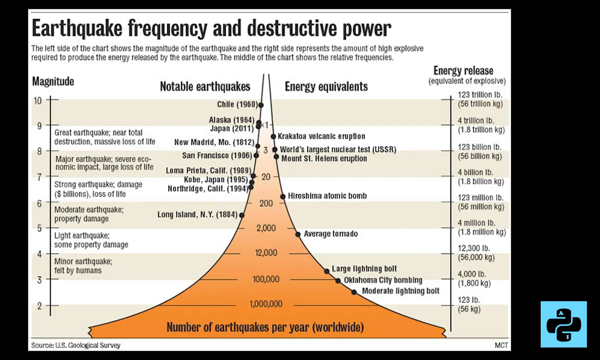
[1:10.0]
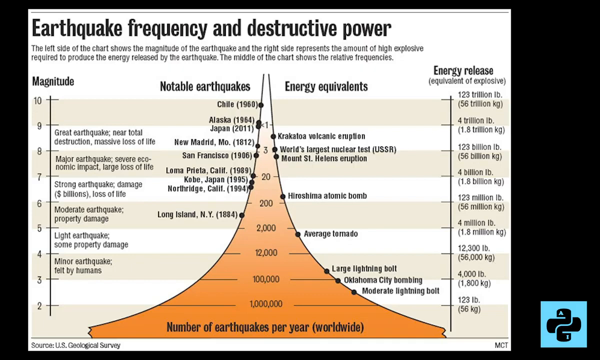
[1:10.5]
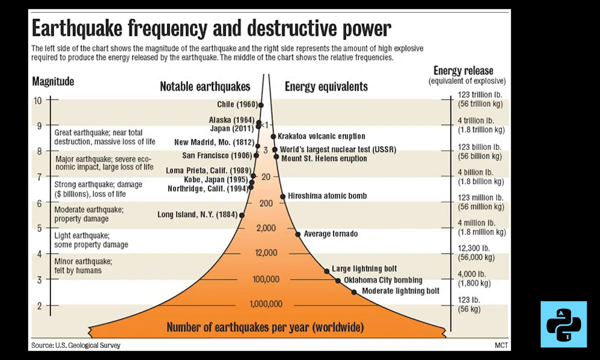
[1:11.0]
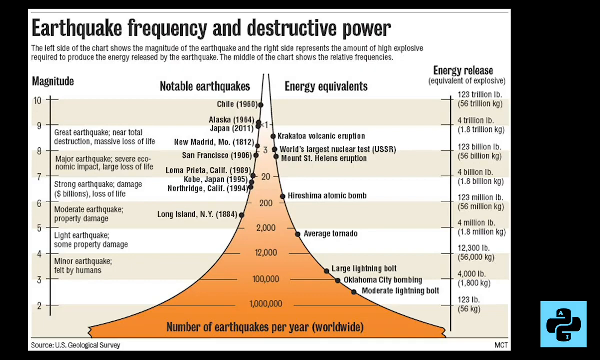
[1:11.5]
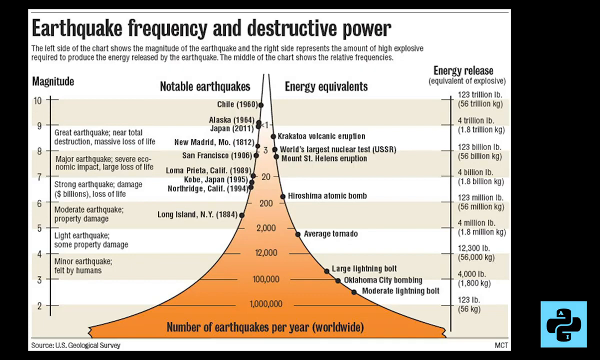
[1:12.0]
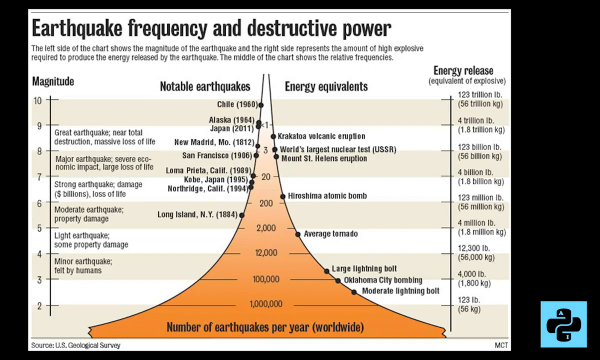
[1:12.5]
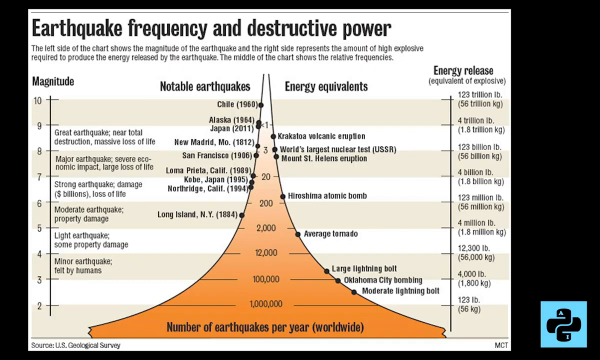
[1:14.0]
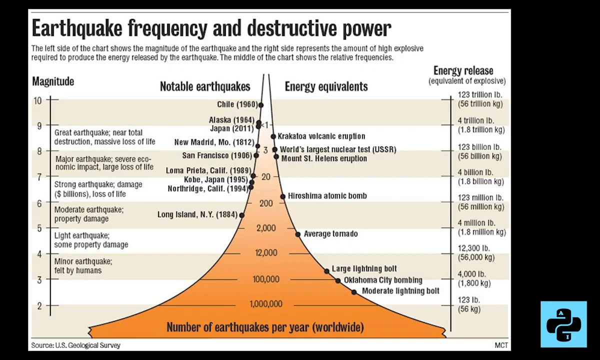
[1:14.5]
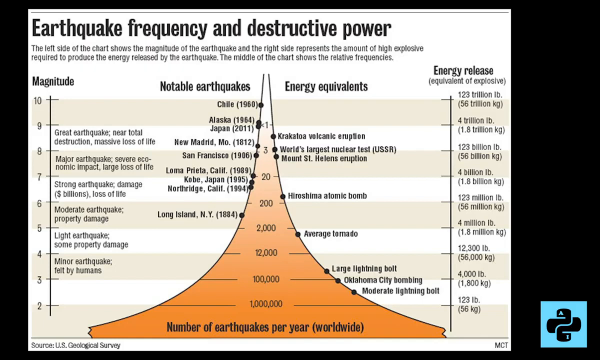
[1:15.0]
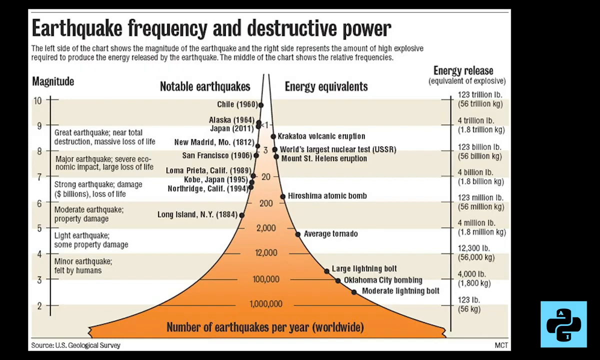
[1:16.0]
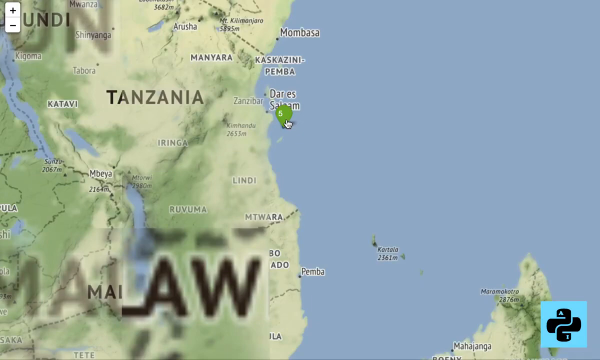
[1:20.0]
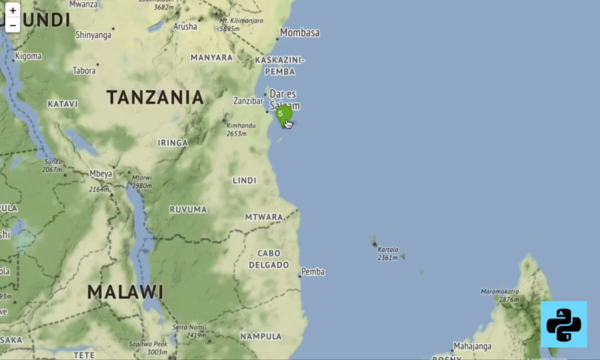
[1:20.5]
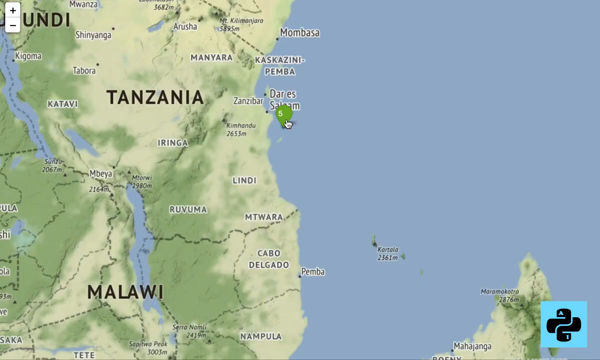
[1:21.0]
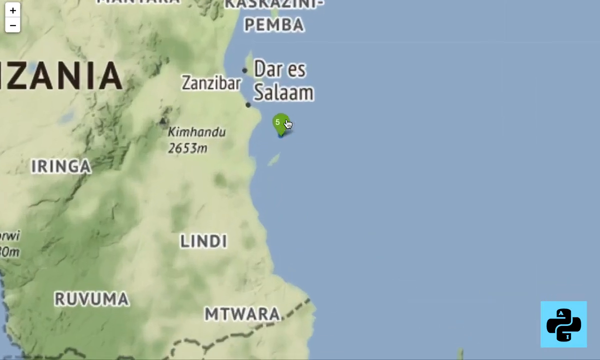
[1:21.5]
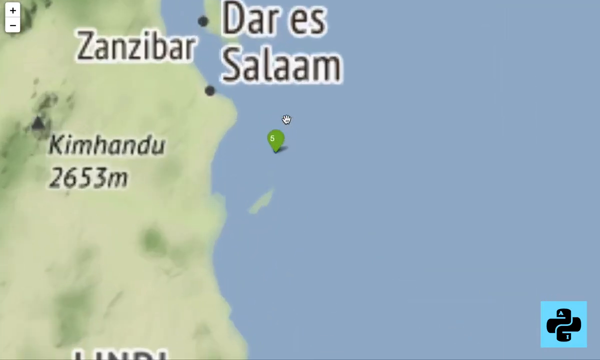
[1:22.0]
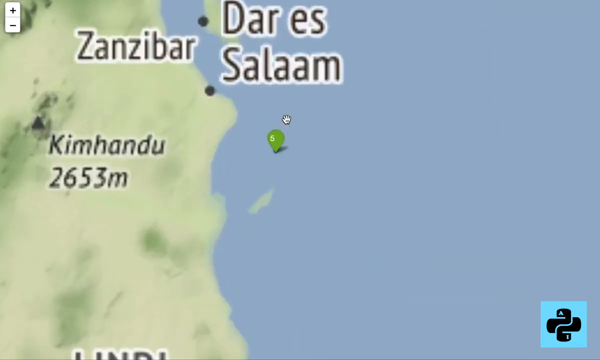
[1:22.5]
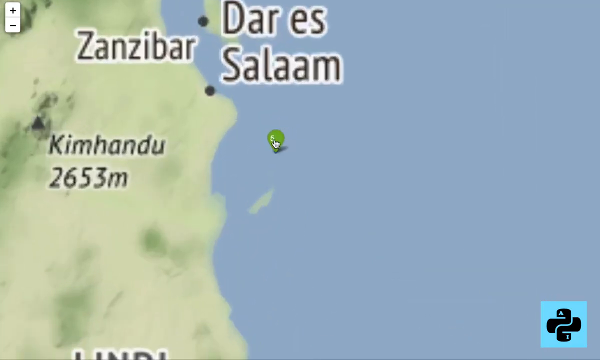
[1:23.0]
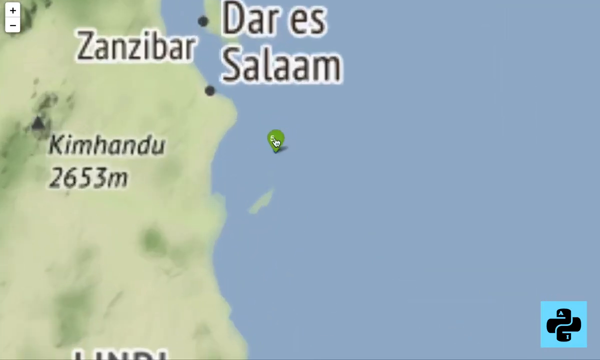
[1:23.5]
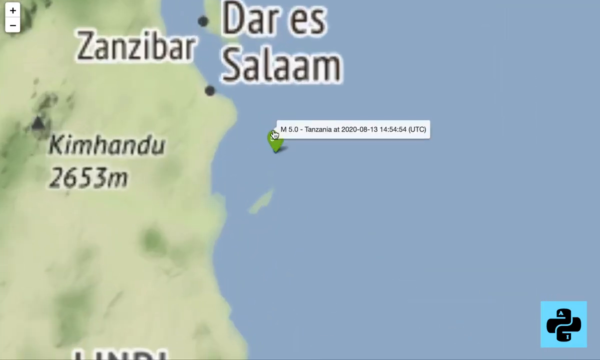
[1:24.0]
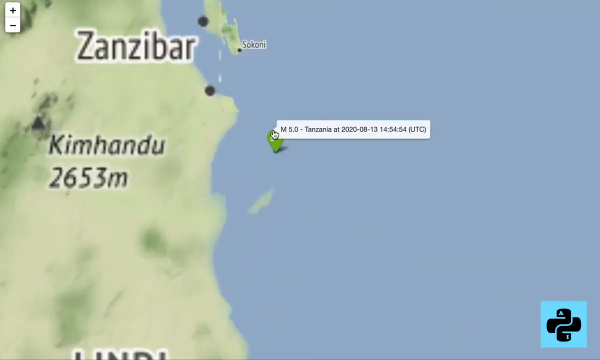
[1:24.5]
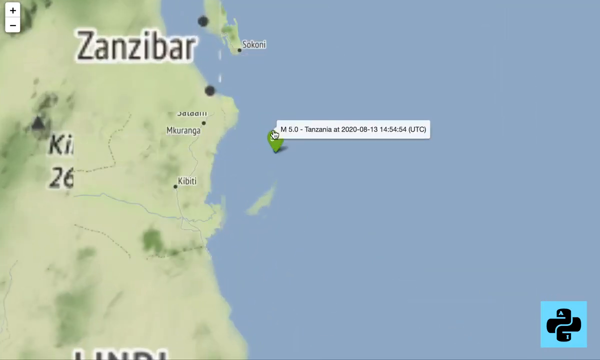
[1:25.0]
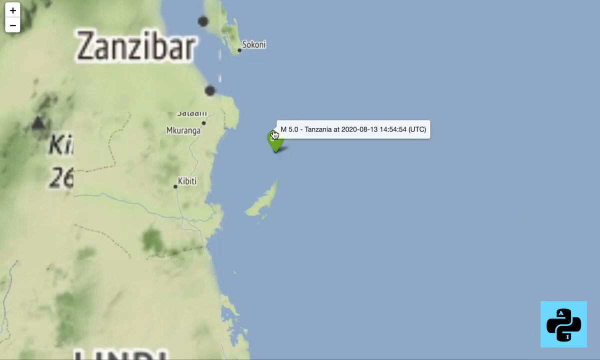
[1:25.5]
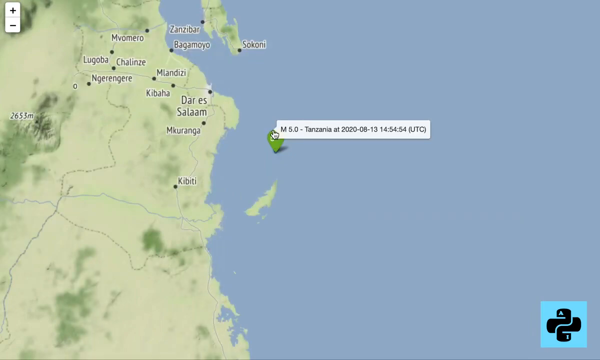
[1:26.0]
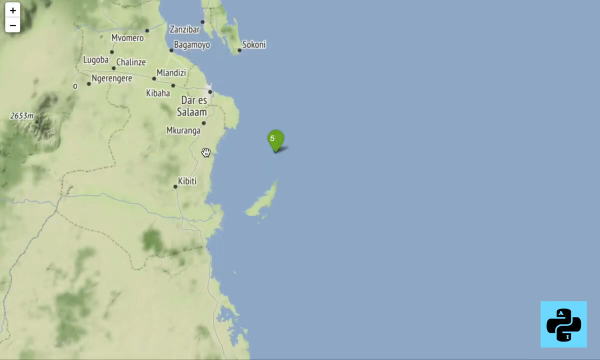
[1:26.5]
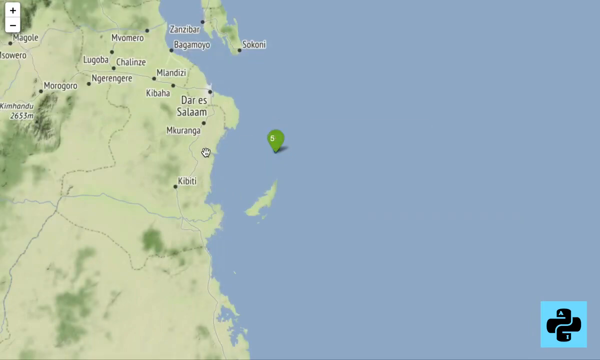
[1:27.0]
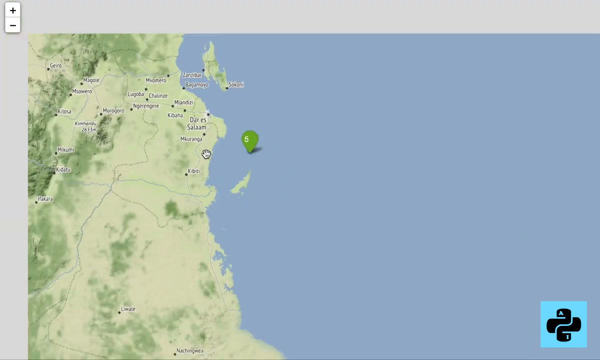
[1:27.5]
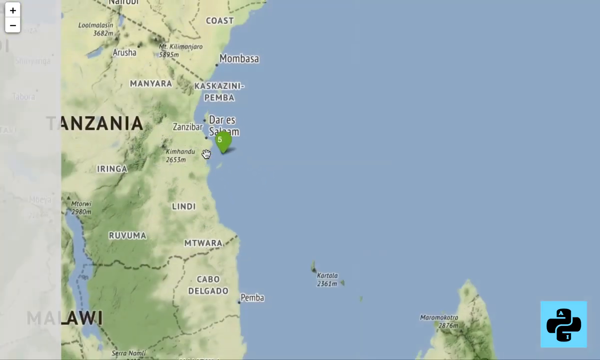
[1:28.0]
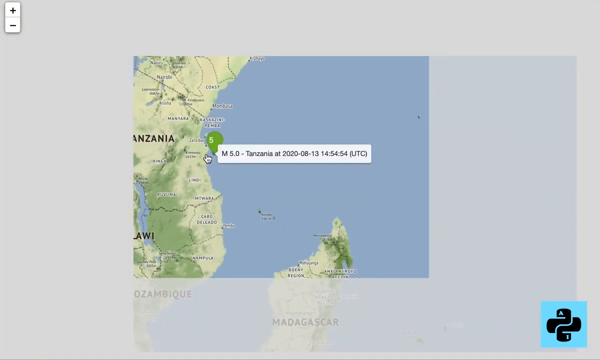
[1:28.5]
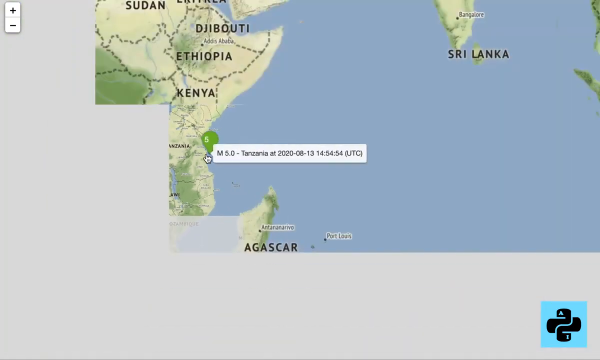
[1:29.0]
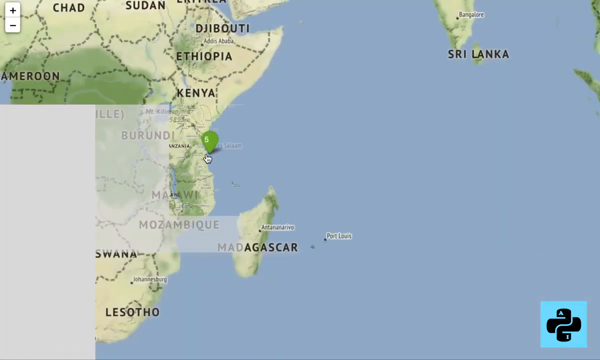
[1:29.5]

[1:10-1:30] An infographic slide is titled "Earthquake Frequency and Destructive Power". On the left side, magnitude runs from 10 at the top down to 0 at the bottom in steps of 1. On the right side is energy release, measured in pounds: the highest figure, at the top, is 123 trillion pounds, and the bottom goes down to zero pounds. The first notch shows 123 pounds, then 4,000 pounds, then 12,300 pounds, so the spacing between notches is not consistent. In the center is a triangle-like figure whose two sides curve inward toward the top without ever meeting, so it is not quite a triangle. At the very top are the headers "notable earthquakes" and "energy equivalents".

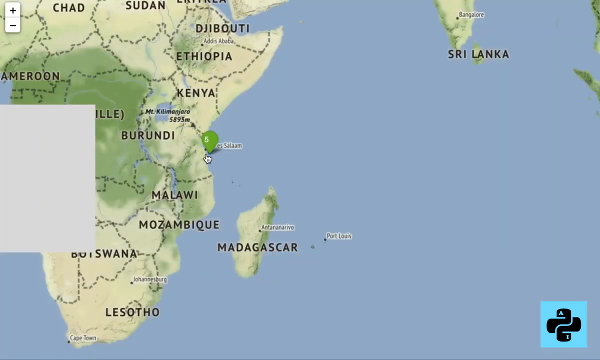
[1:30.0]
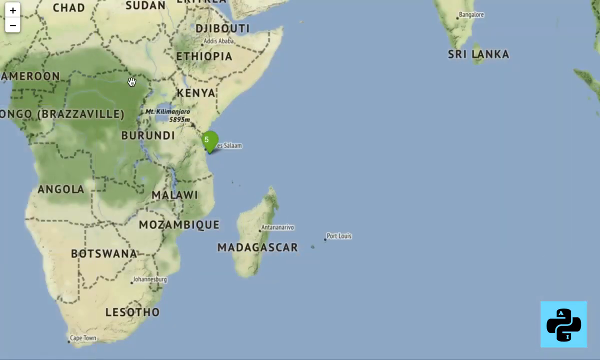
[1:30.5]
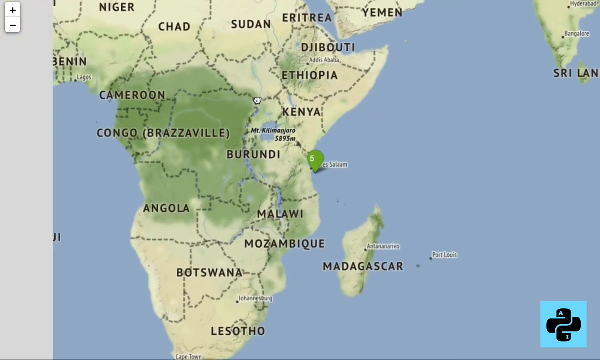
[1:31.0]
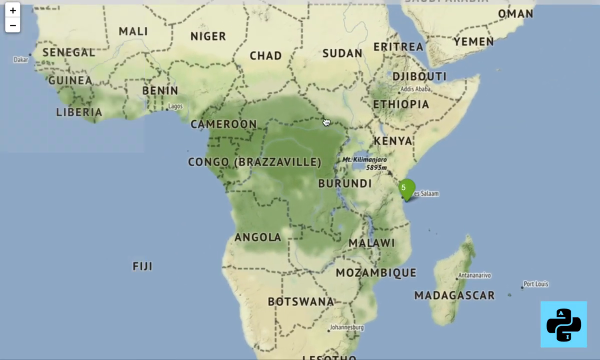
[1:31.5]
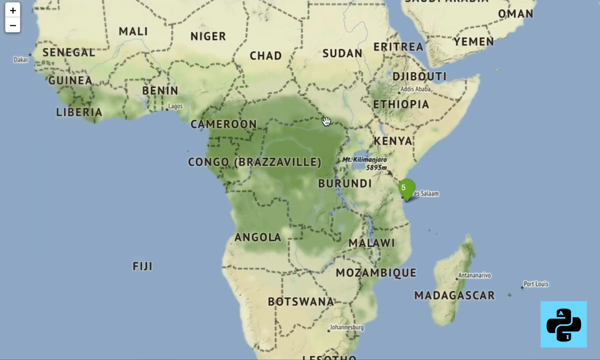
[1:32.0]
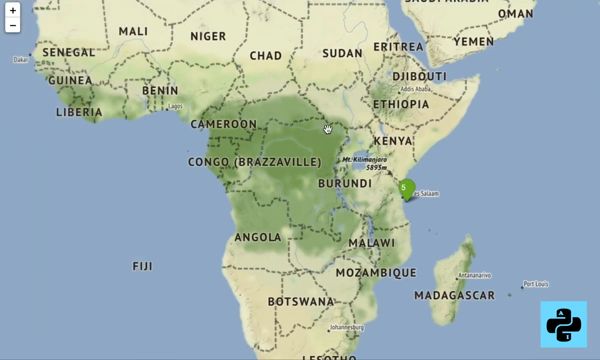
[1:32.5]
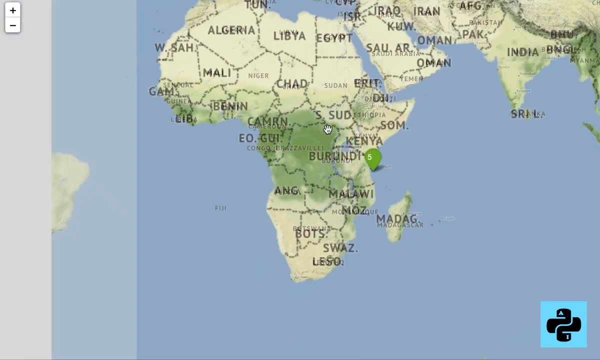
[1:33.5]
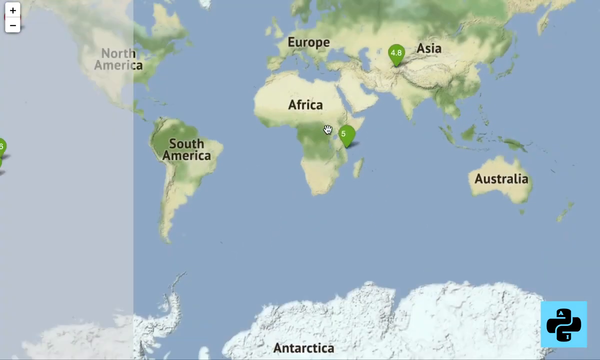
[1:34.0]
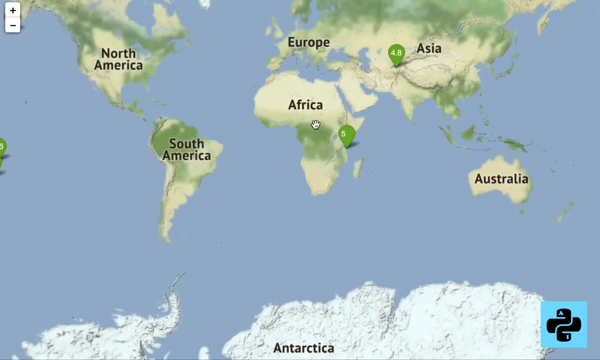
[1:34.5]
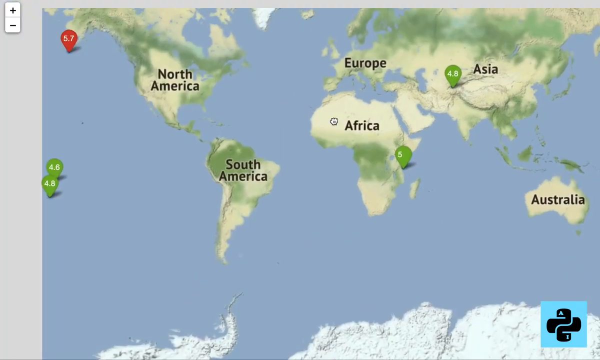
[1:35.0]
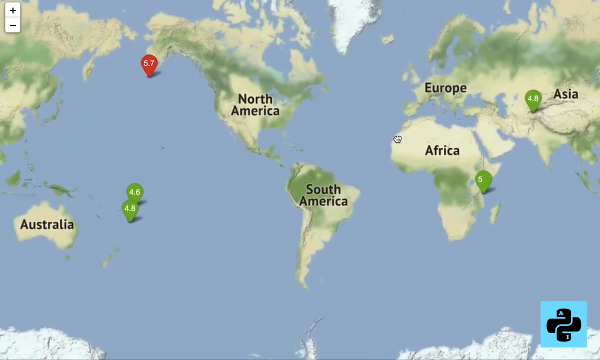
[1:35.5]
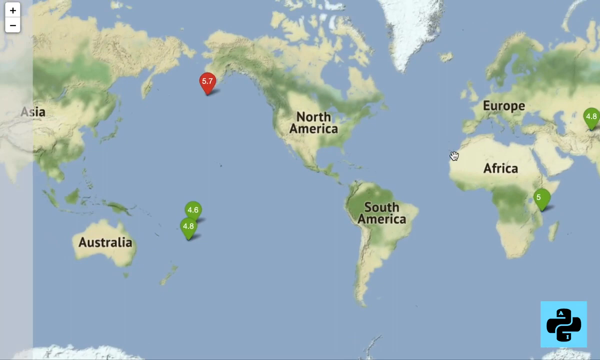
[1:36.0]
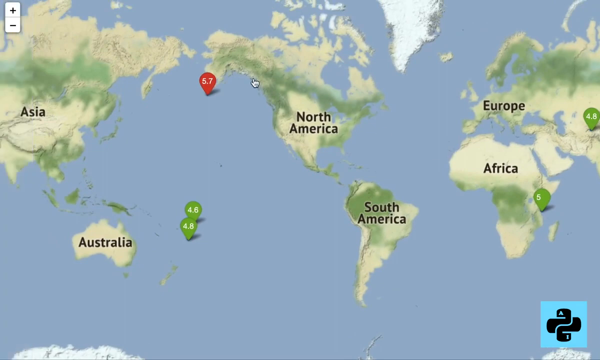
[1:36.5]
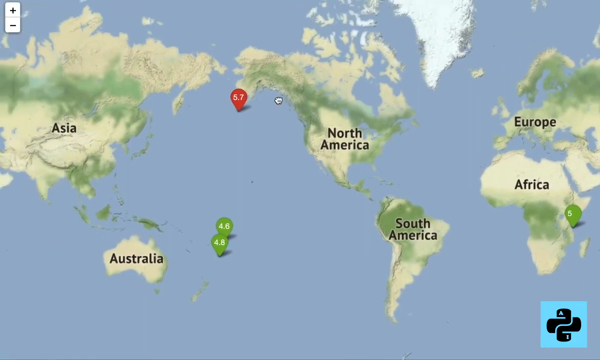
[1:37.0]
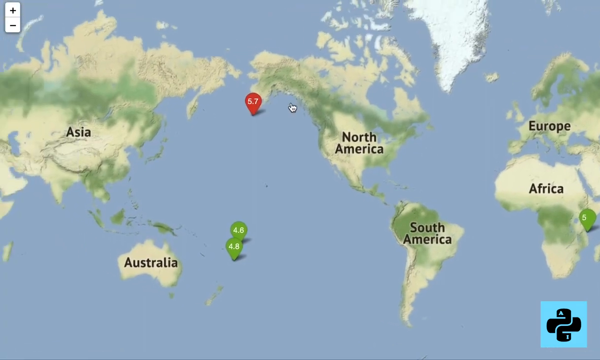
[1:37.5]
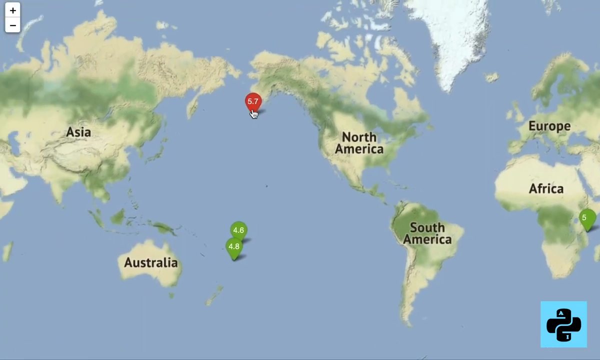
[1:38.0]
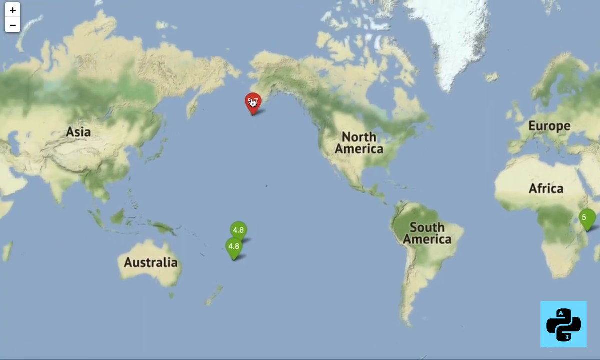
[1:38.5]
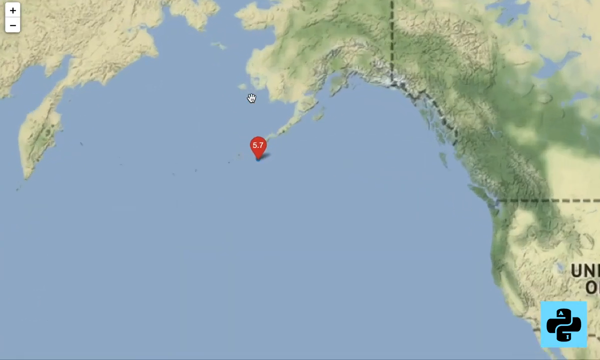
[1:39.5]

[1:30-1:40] A map image of Africa shows a green marker off the coast of Burundi; it has a five on it, but the rest of the number cannot be read closely. The different countries of Africa are visible. The image then zooms out, and a little hand on the screen pulls the digital map to the left until it is near a red 5.7 marker near Alaska. From the zoomed-out view, North America, South America, Europe, Africa, Australia and Asia are all visible.